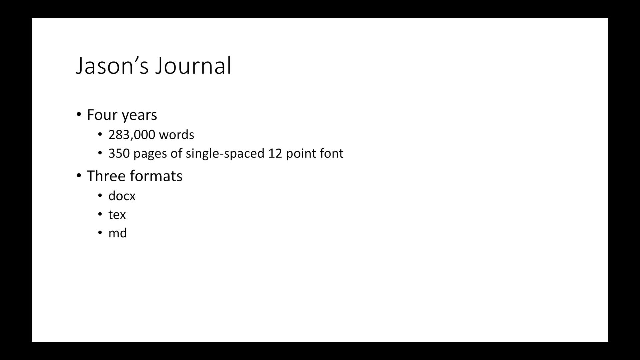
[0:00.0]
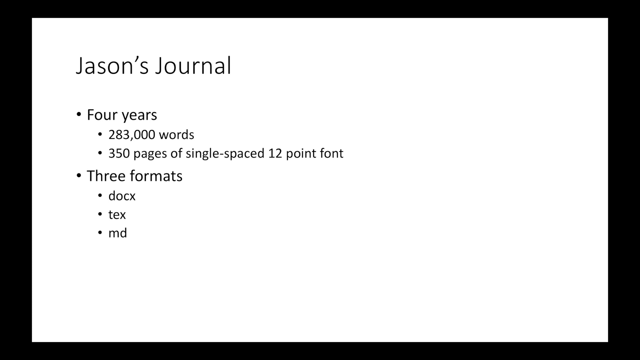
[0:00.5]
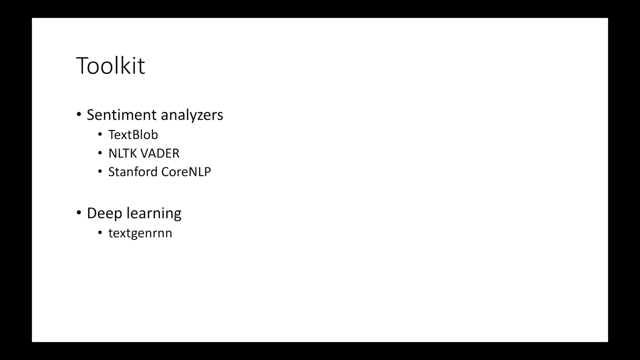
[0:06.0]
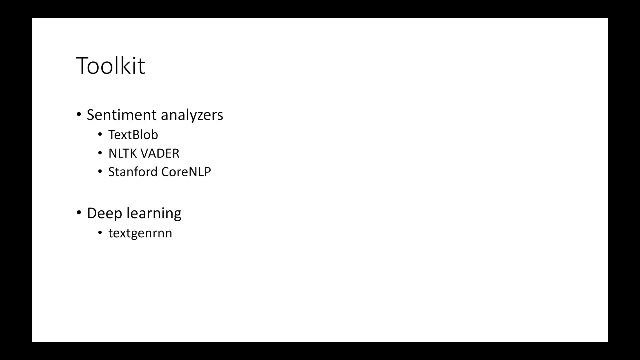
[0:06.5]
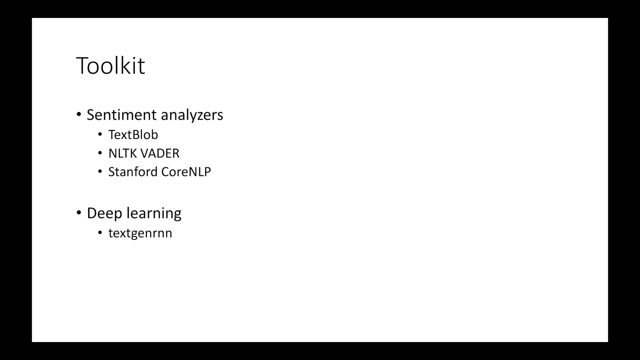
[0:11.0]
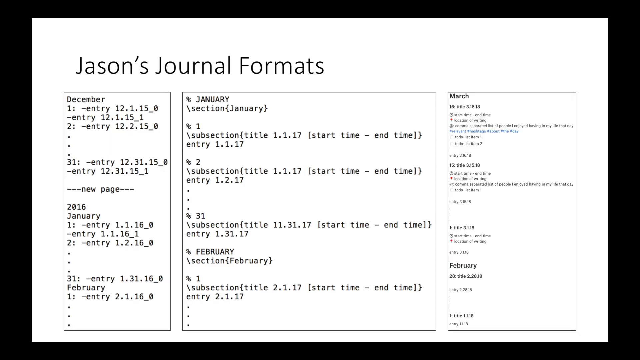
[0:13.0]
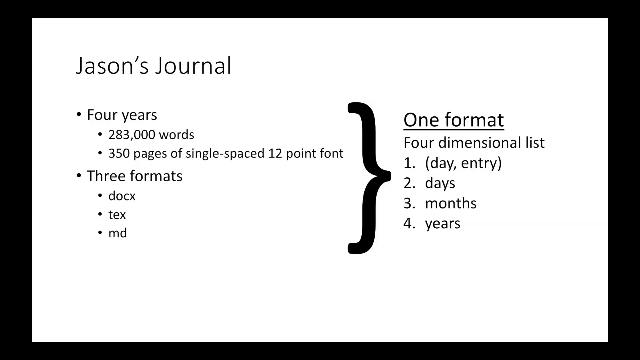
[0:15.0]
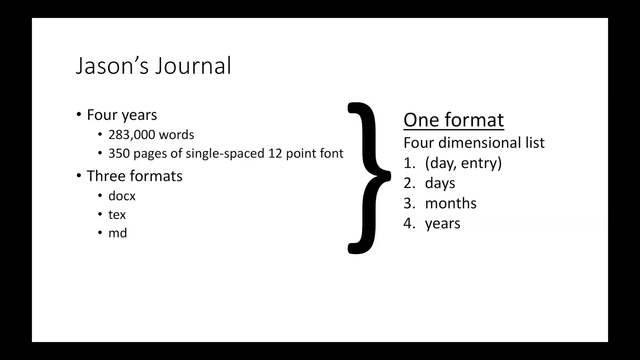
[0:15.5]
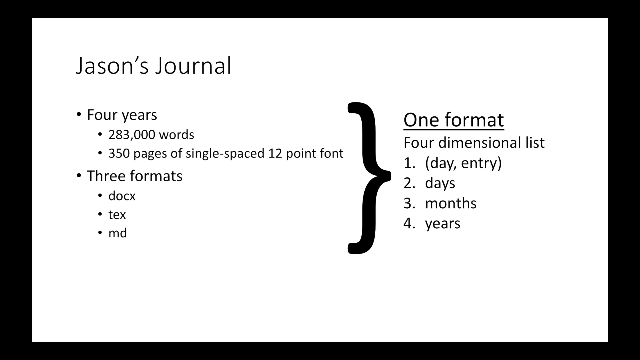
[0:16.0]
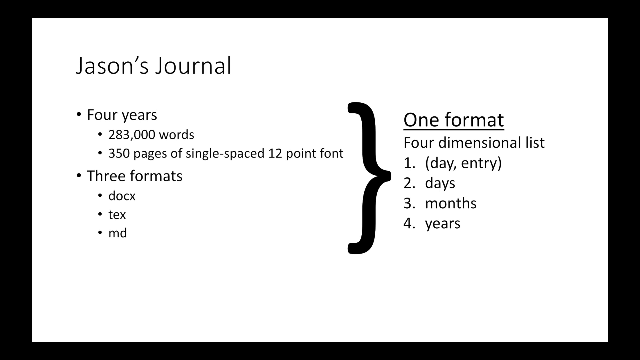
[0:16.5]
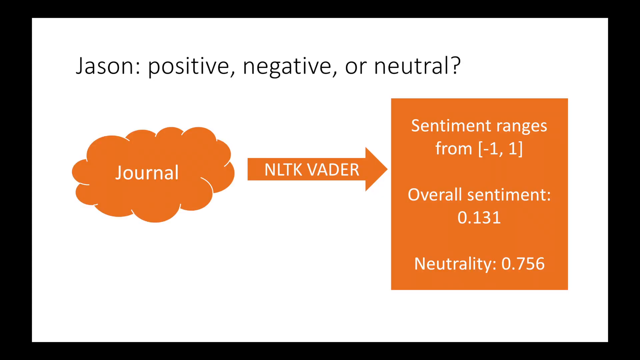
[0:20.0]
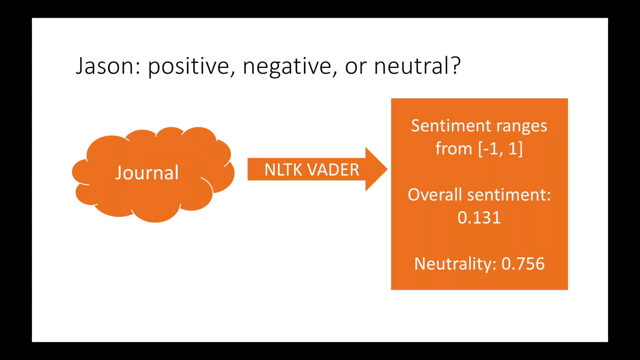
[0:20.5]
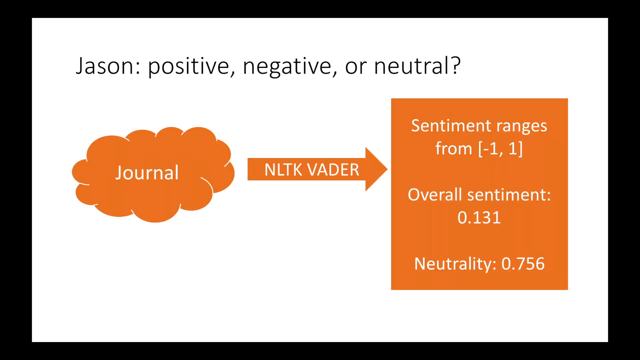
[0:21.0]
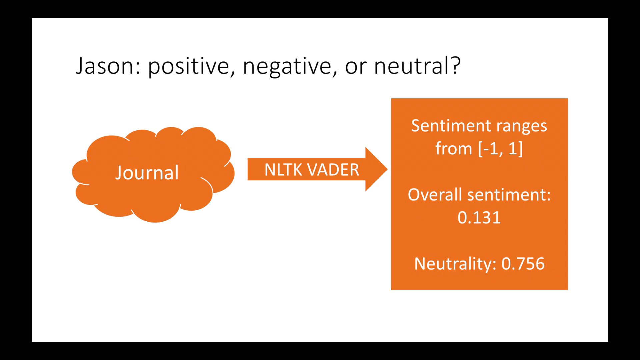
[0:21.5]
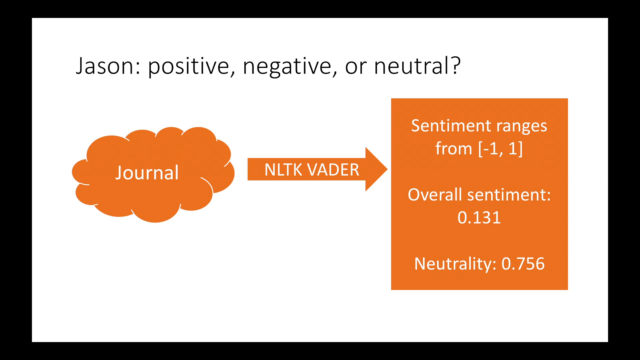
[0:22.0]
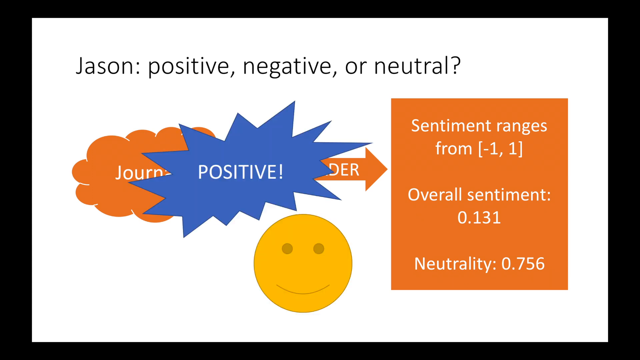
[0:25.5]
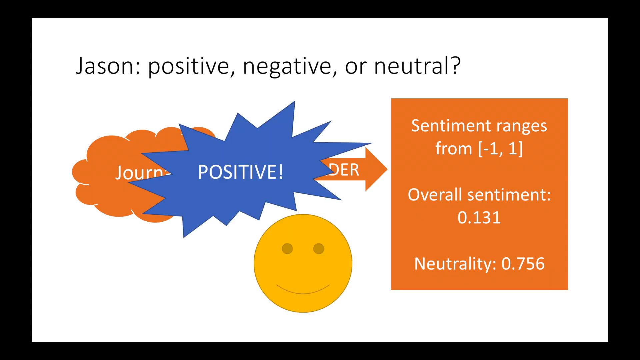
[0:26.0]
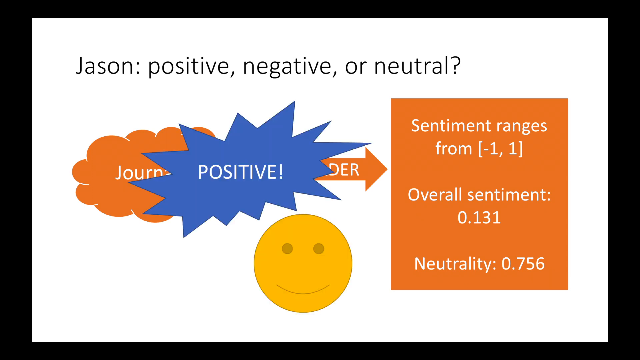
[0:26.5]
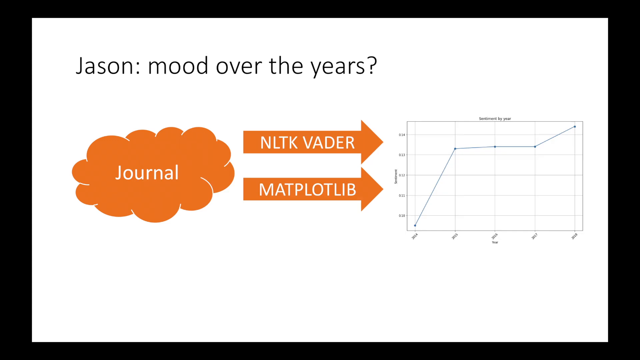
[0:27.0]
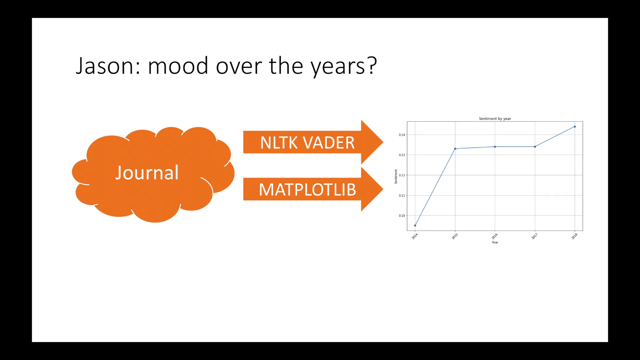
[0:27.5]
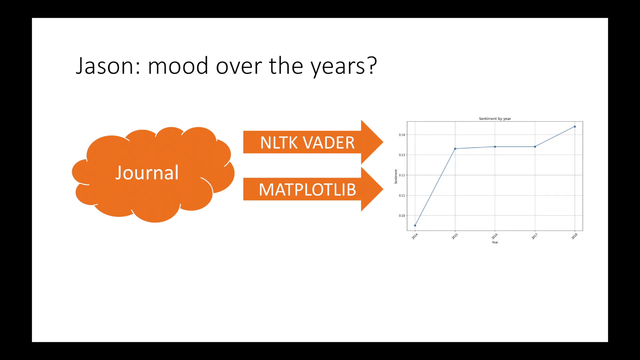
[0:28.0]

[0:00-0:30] Black text appears against a white background. The text has two main points: one is "4 years" and the other is "3 formats." Under "4 years" is a bullet point reading "283,000" words, and further bullet points mention 750 pages and 150 pages. Another screen follows with bullet points listing "NLTK," "Stanford," "Cornell" and "NLP"; a second bullet point reads "deep learning." The video then shows different formats and books. The next screen is Jason's journal, again listing "4 years" and "3 formats." Under "3 formats" the points are "docs," "text" and "md," all grouped in a bracket that points to one format that is four-dimensional, numbered 1 to 4: day, days, months and years. A thin cloud bubble contains the text "journal," and an arrow leads to a big square box. A cloud pops up showing "positive."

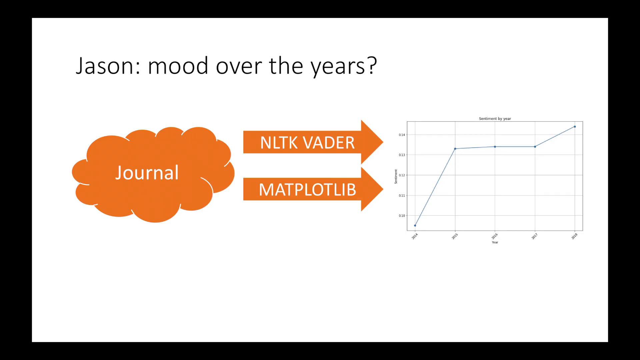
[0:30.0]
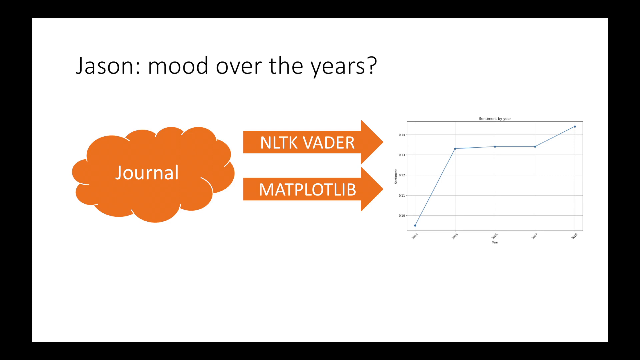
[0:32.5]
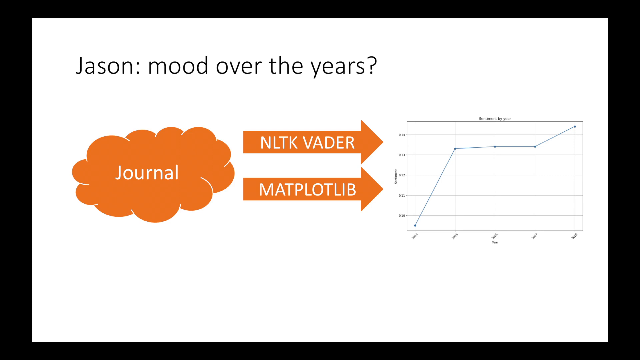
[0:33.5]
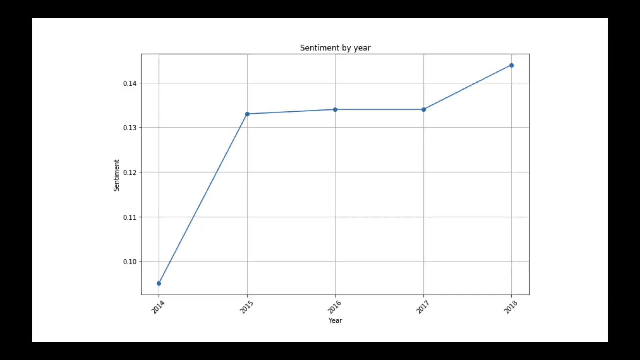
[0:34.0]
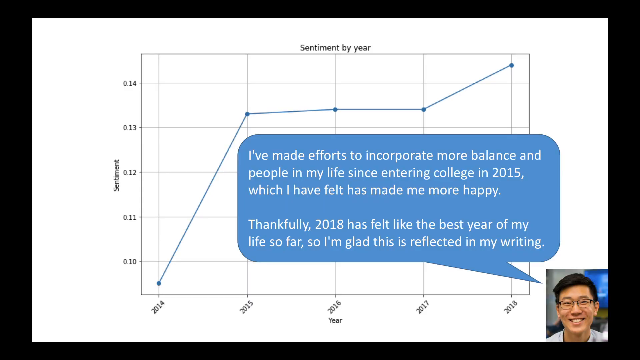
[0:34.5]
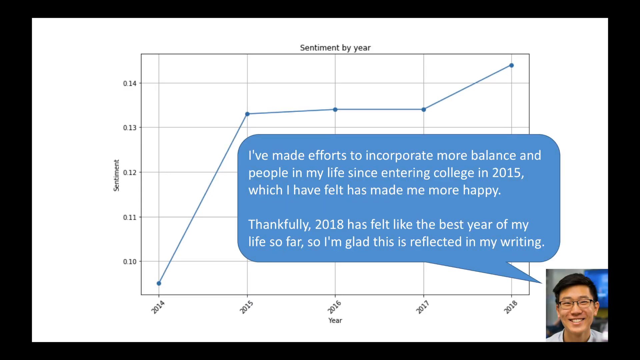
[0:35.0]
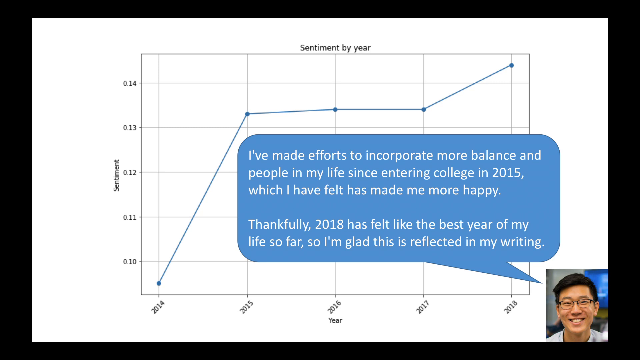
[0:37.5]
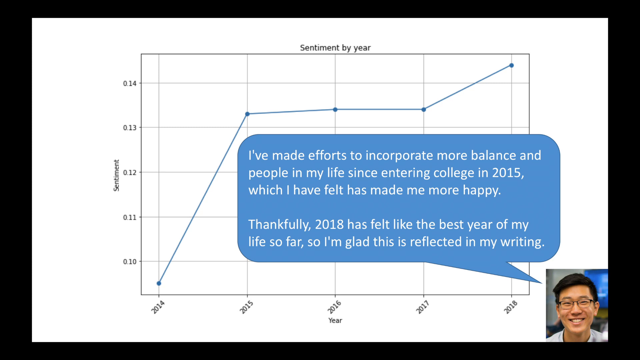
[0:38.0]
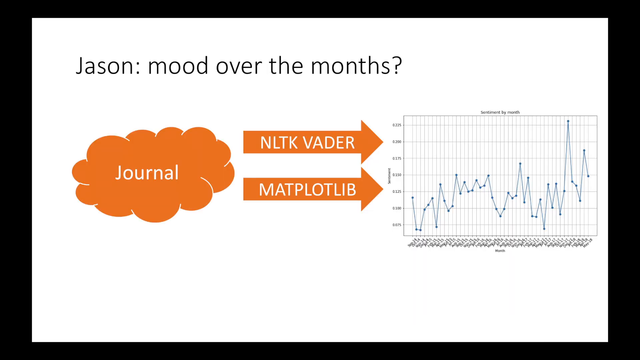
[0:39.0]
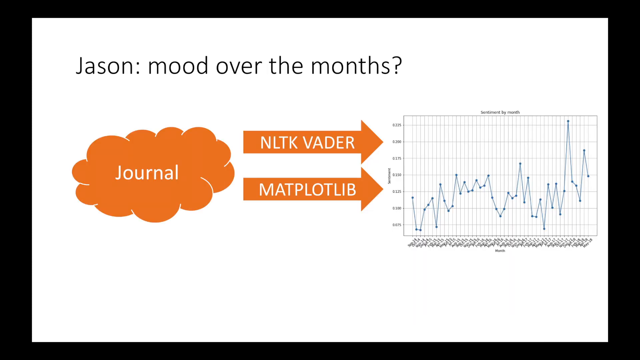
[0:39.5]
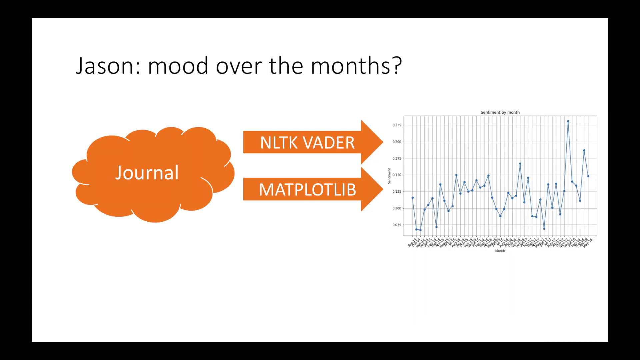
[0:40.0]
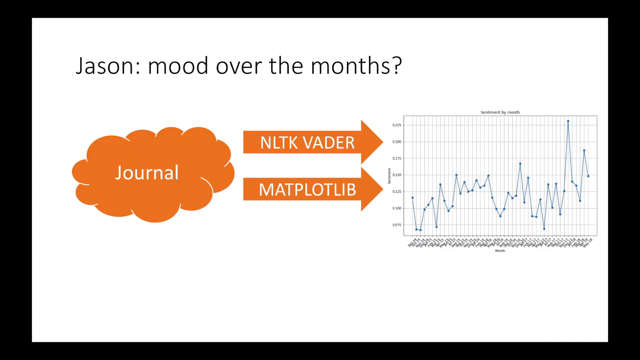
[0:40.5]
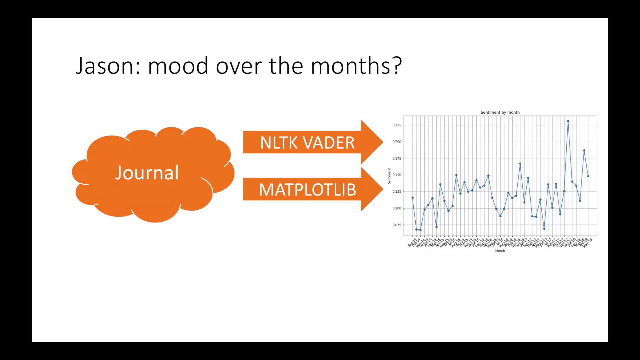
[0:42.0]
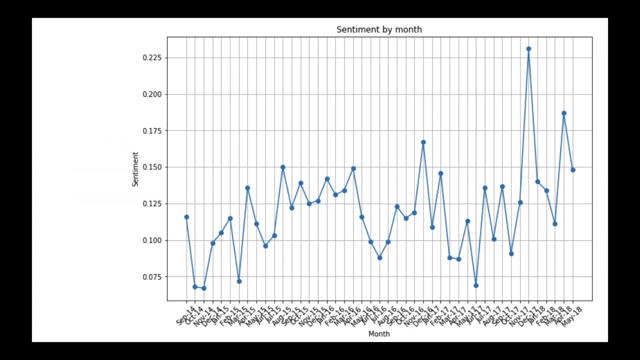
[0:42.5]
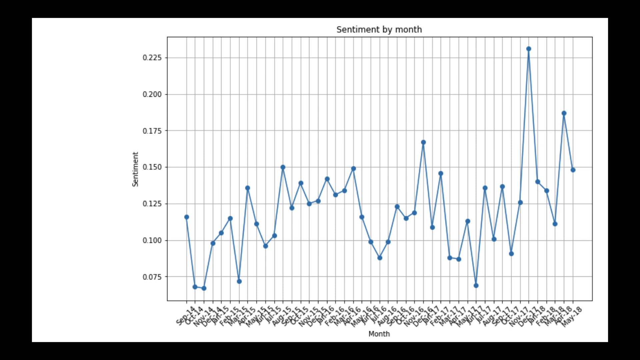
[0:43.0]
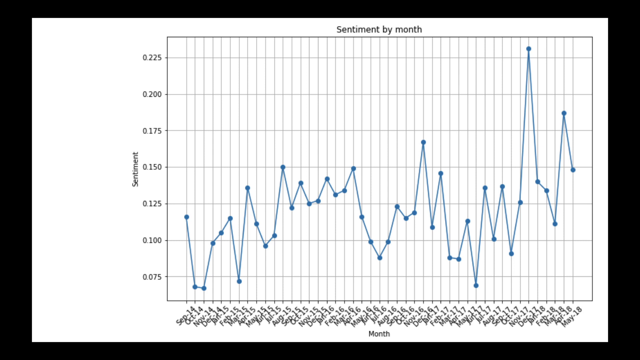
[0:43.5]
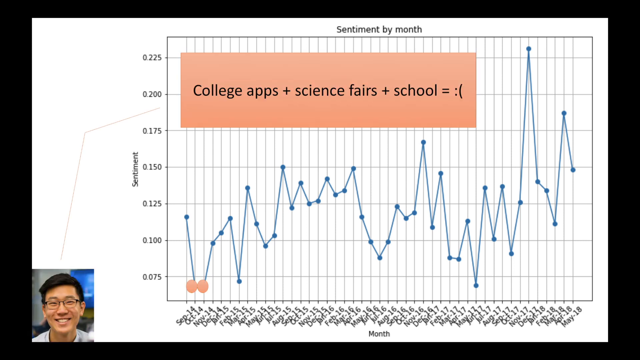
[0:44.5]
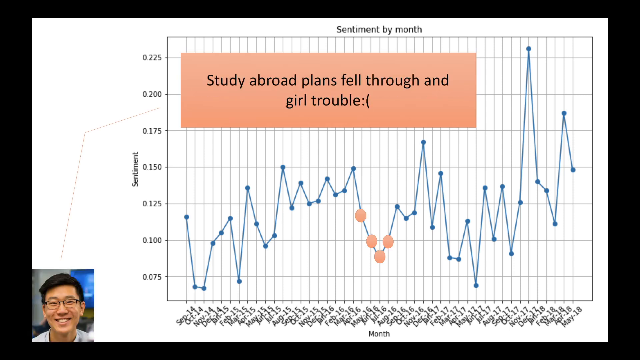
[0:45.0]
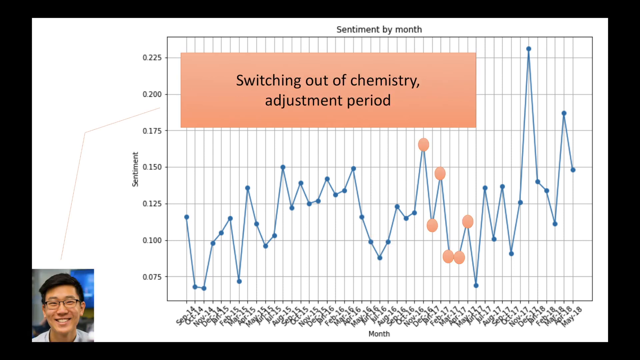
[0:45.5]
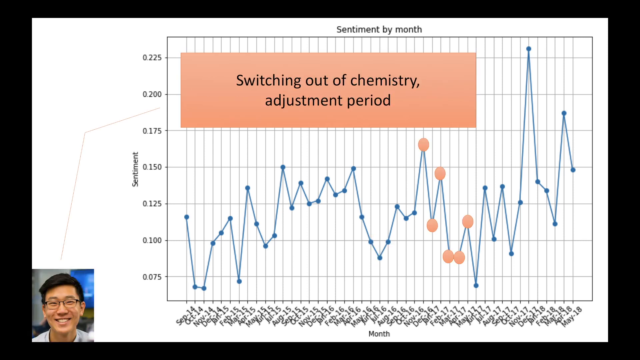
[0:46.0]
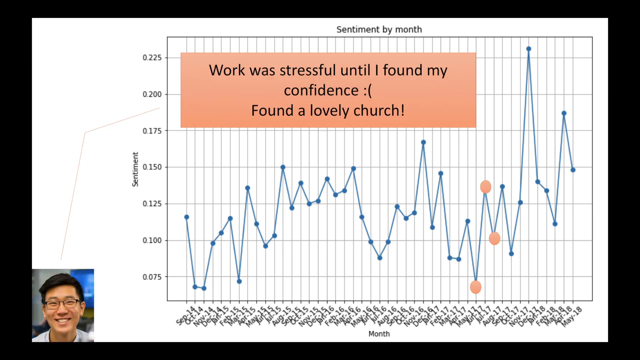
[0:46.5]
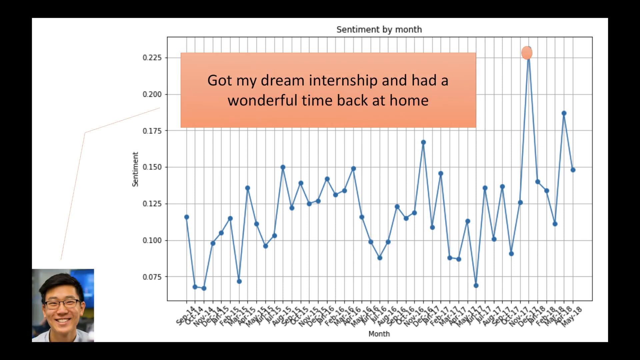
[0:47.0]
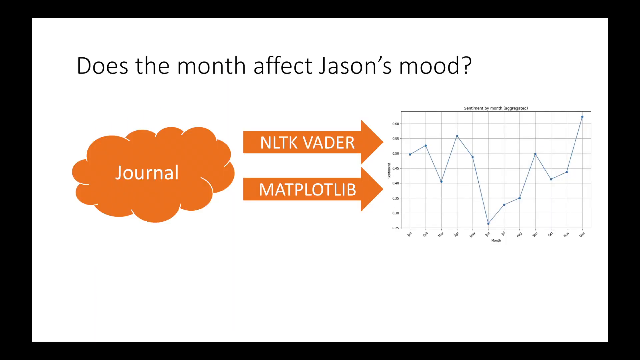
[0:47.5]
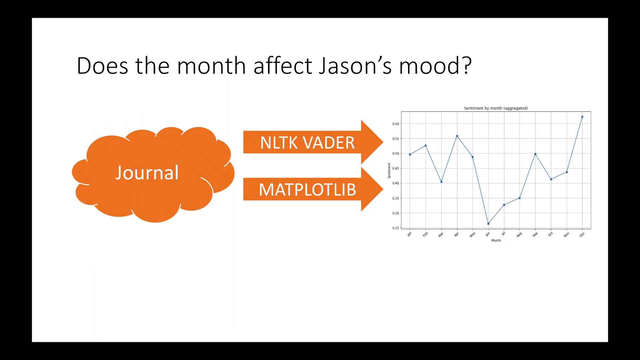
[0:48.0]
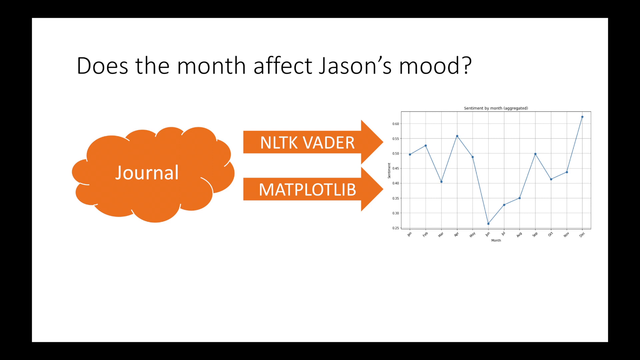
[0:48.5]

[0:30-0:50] An orange cloud has "journal" written in it, with two arrows, both orange; one points to a graph. The graph shows mood over the years. The graph is then zoomed to its own page. A picture of a person wearing glasses is in the bottom right corner, and text seems to be coming out of this person, all on a blue background. The top of the graph reads "sentiment by month."